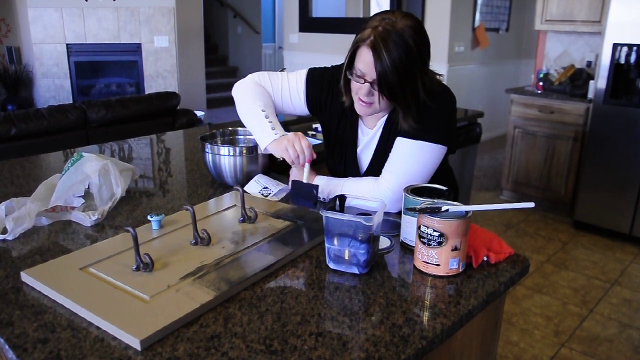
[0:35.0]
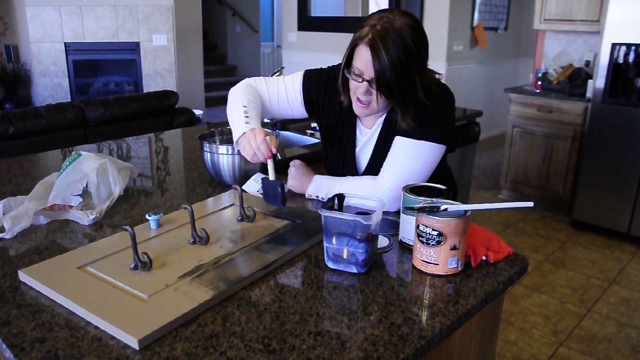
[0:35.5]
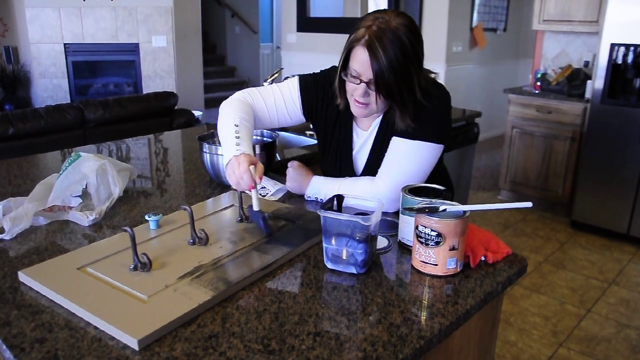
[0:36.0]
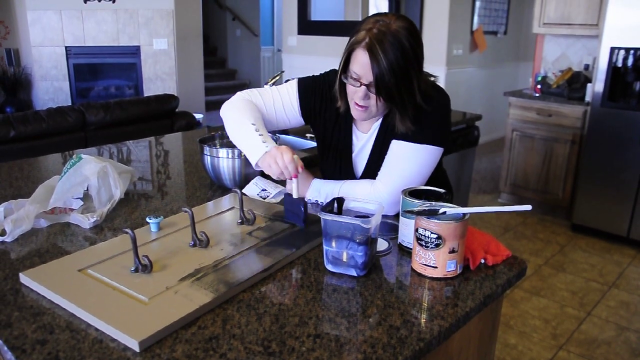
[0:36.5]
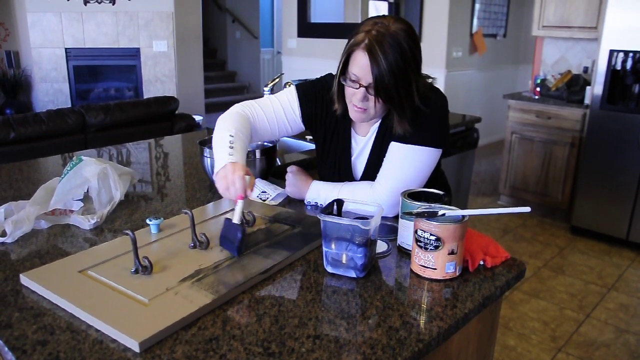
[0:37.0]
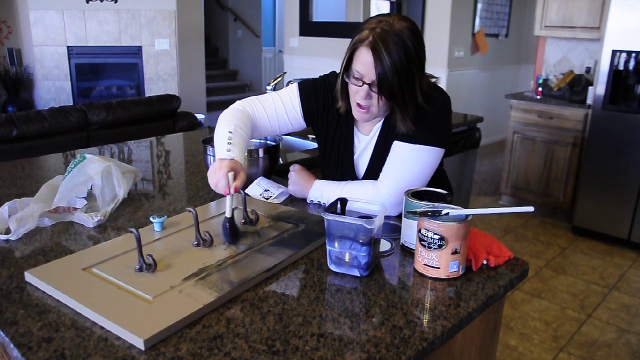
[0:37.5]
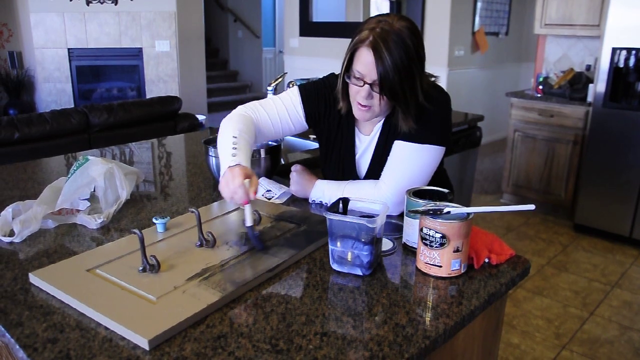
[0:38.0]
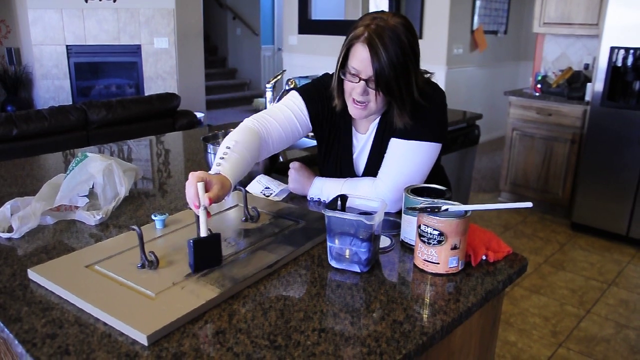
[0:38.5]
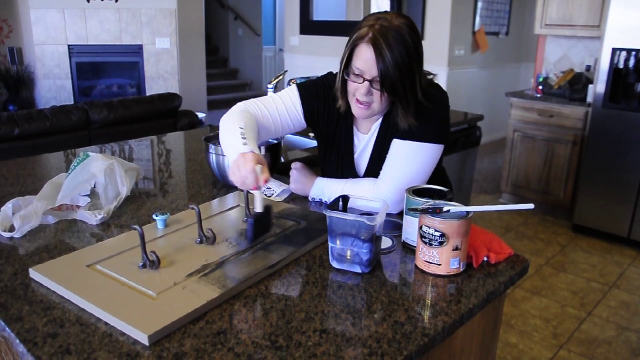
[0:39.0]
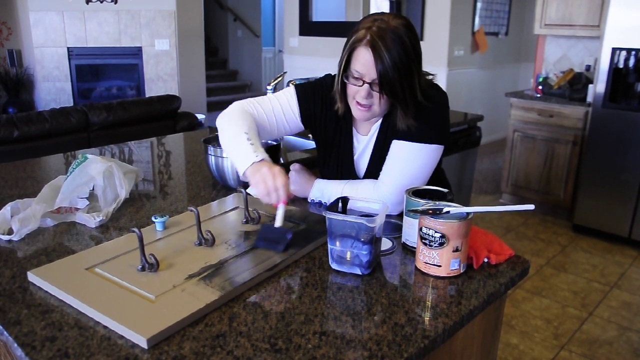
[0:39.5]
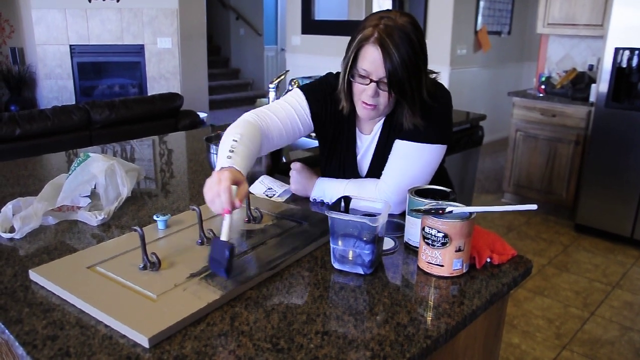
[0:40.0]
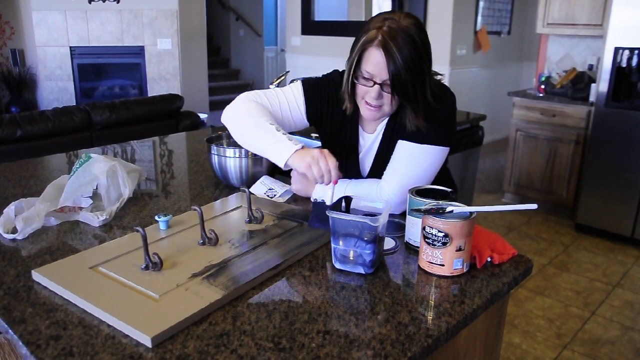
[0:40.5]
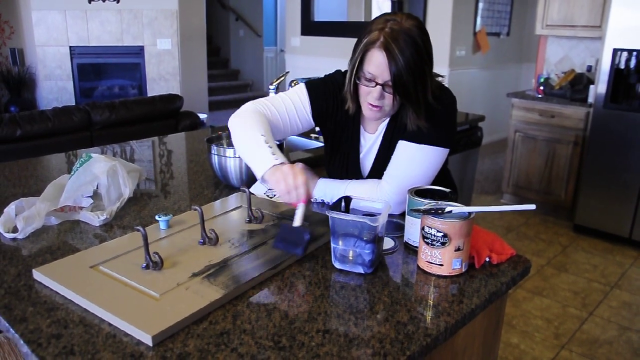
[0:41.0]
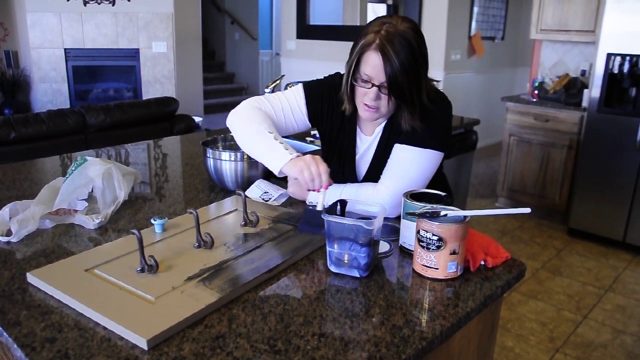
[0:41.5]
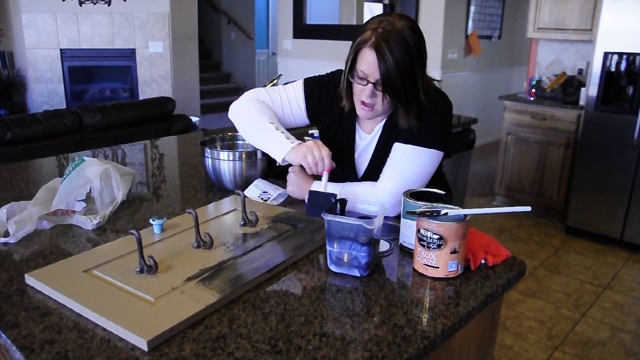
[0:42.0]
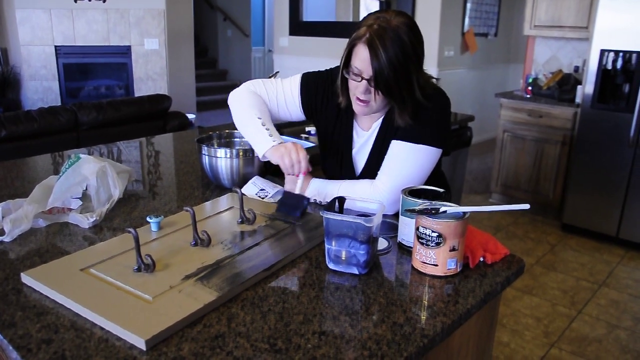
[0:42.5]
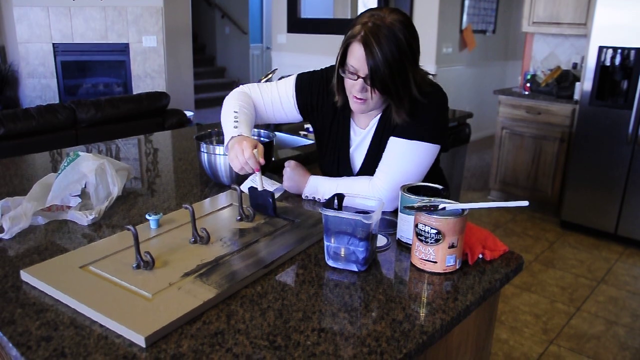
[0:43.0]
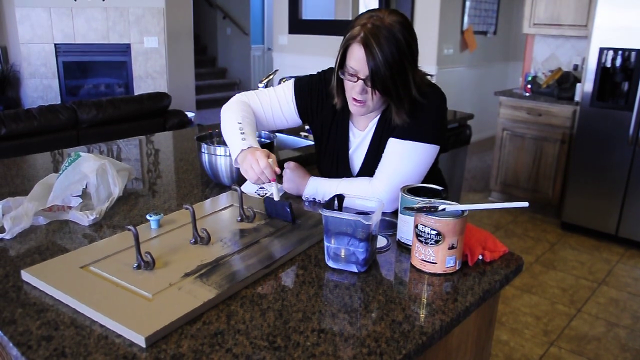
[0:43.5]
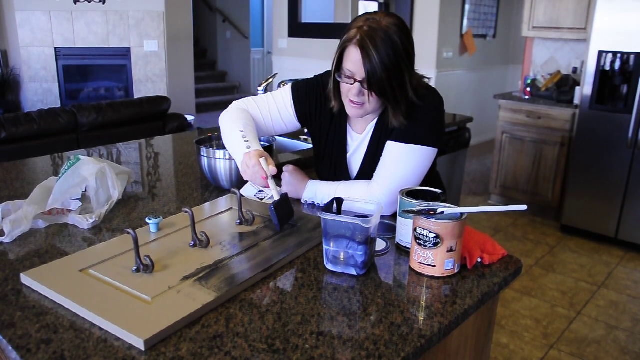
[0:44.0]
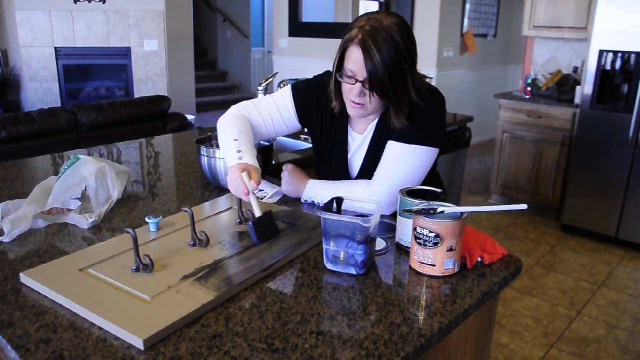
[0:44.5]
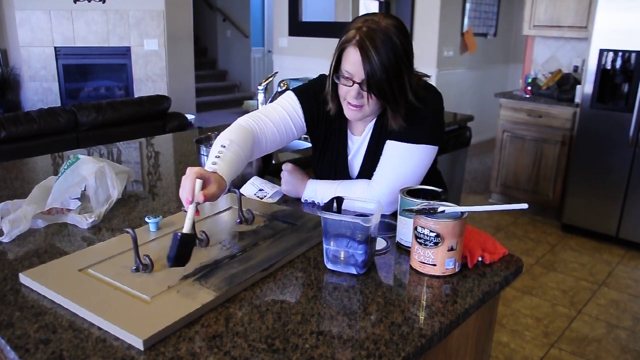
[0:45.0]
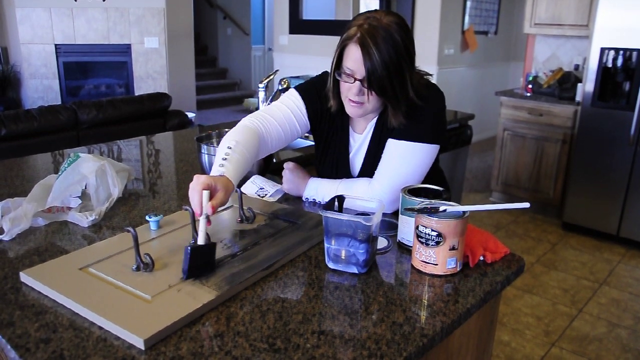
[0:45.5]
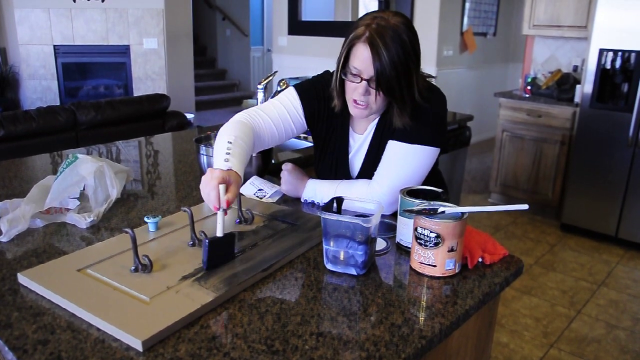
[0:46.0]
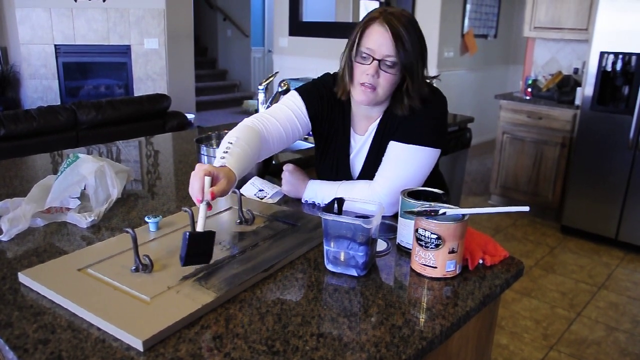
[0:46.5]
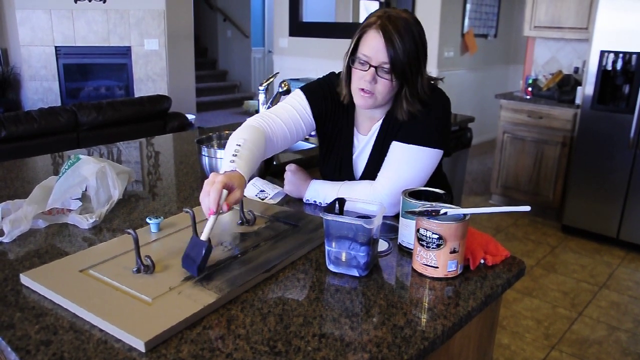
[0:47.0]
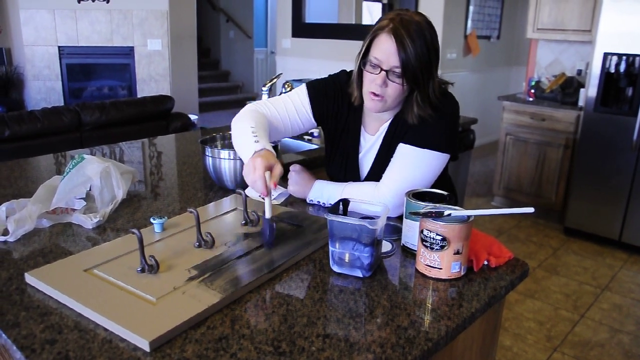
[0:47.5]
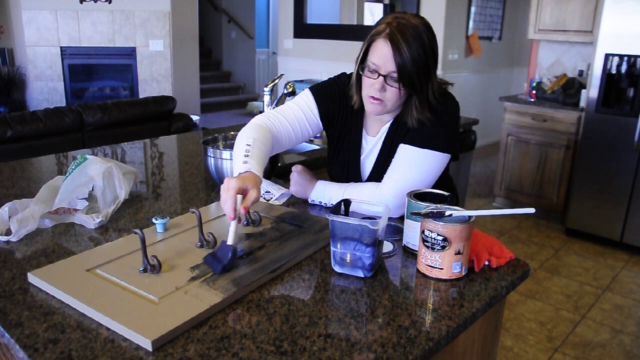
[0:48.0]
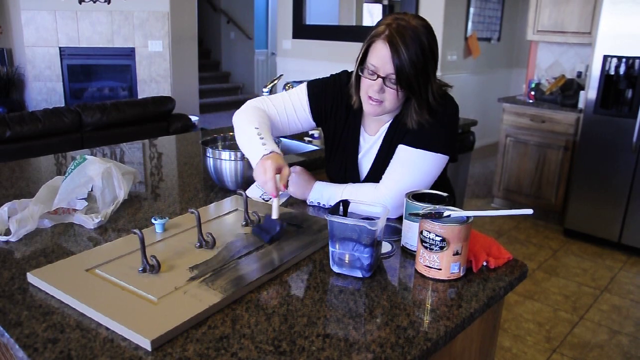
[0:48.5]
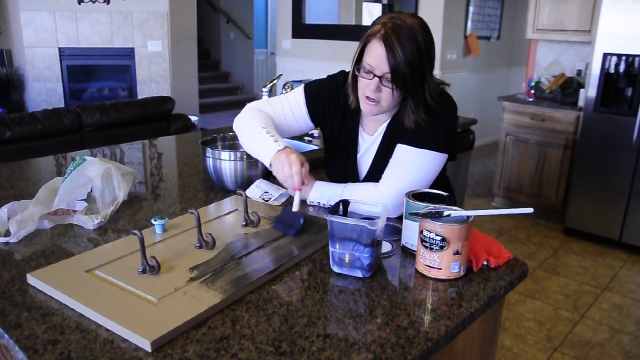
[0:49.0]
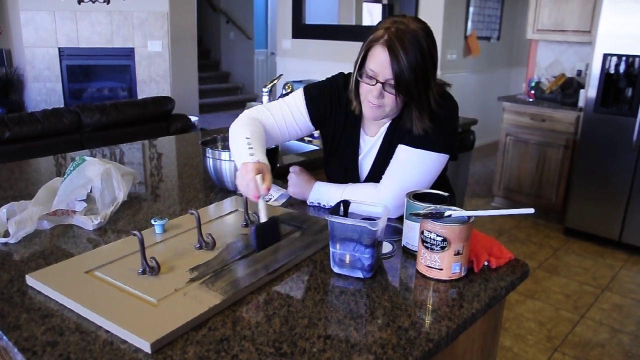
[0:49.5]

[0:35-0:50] In the YouTube video titled How to Glaze Furniture, a woman uses a paintbrush in her right hand to apply what appears to be a dark blue or black paint. She is leaning against a dark brown marble kitchen counter with two cans of paint and a plastic container holding some paint. The piece of wood she works on has three metal hooks in its center and a knob at the top that appears to be ceramic. A stainless steel side-by-side refrigerator is in the background of the kitchen. She talks while painting, so it appears to be an instructional video. She is painting the upper right corner of the wood from the viewer's point of view, which is the lower left from hers.